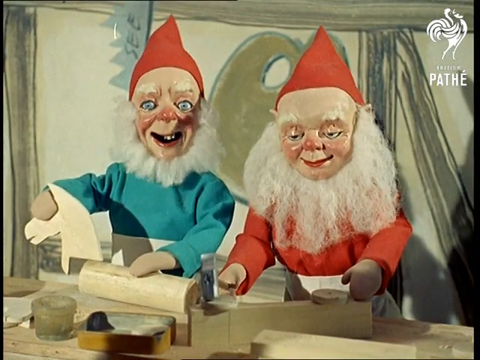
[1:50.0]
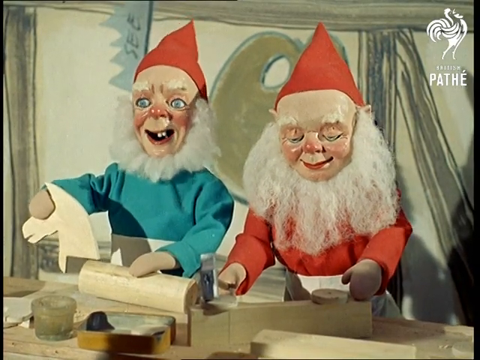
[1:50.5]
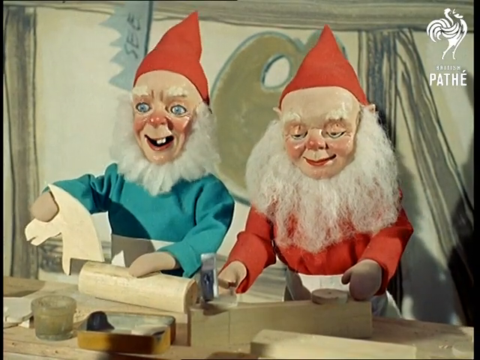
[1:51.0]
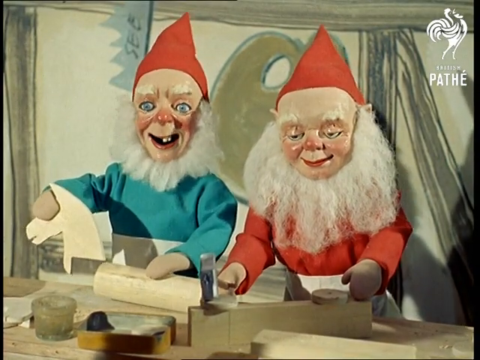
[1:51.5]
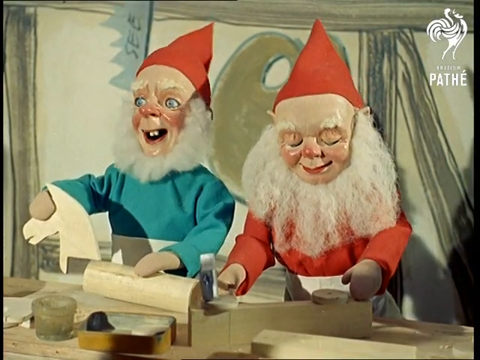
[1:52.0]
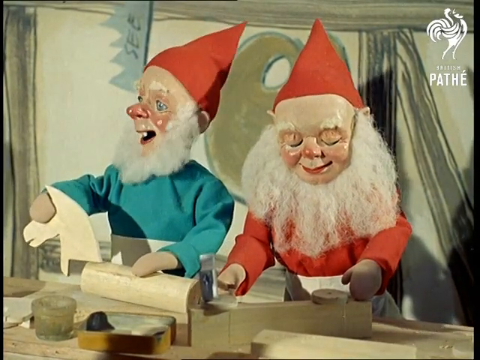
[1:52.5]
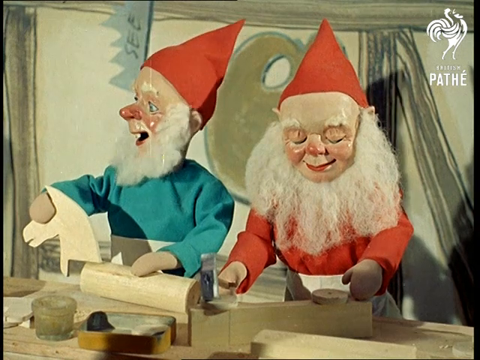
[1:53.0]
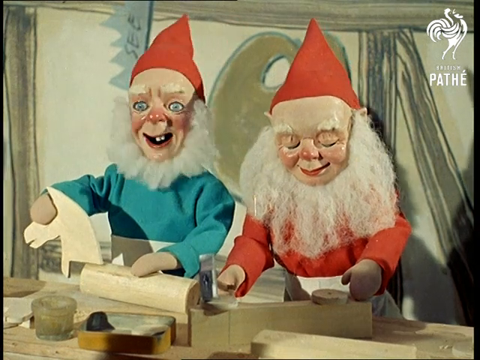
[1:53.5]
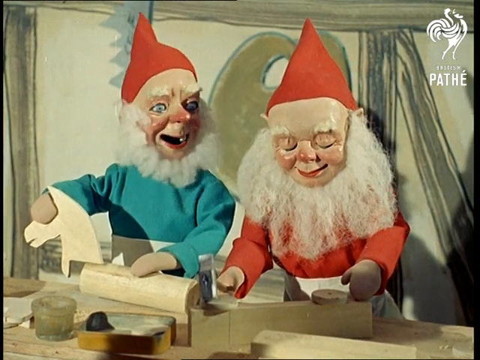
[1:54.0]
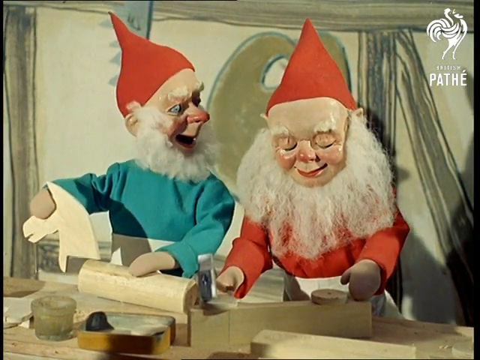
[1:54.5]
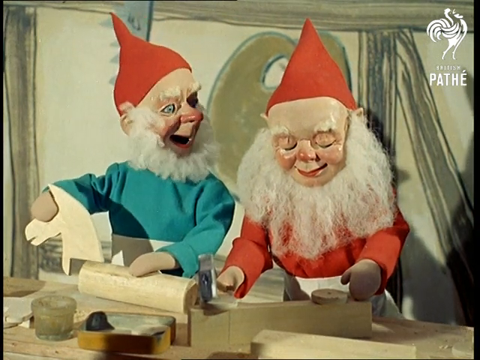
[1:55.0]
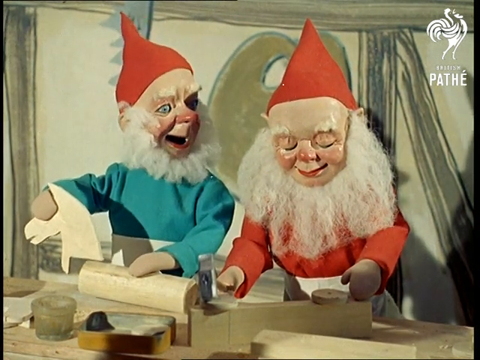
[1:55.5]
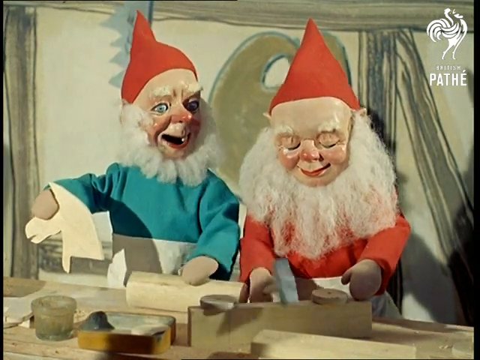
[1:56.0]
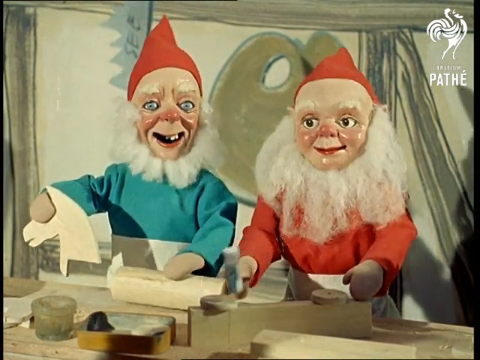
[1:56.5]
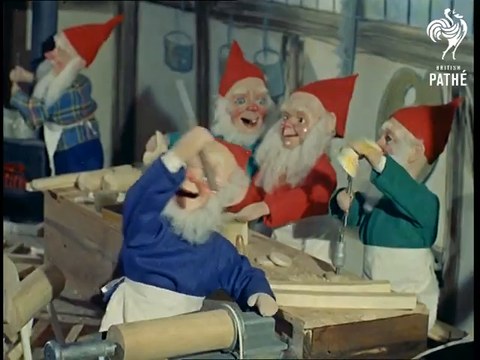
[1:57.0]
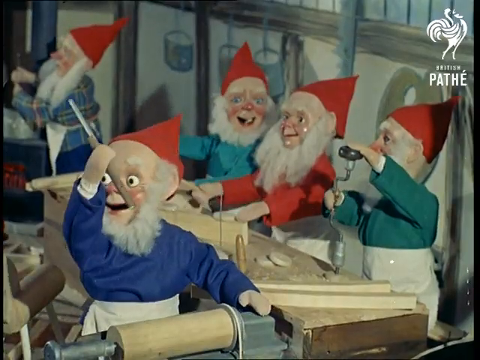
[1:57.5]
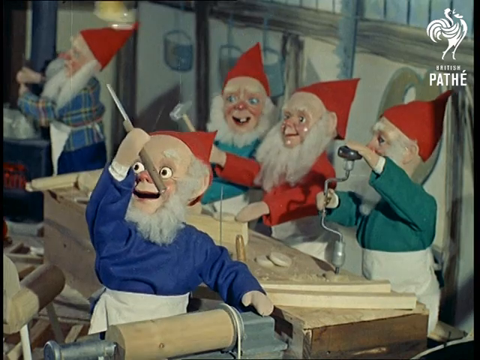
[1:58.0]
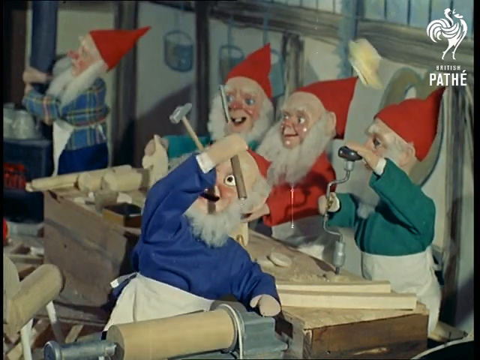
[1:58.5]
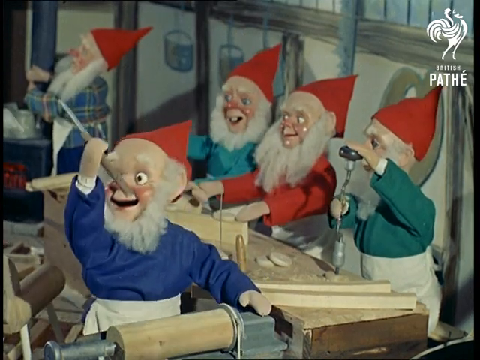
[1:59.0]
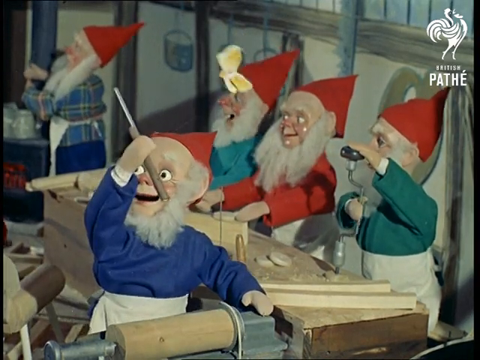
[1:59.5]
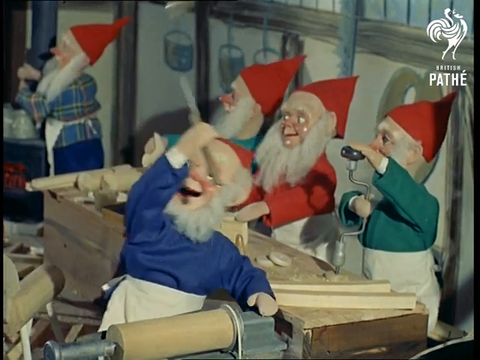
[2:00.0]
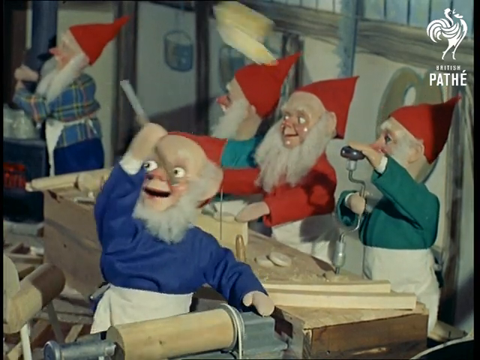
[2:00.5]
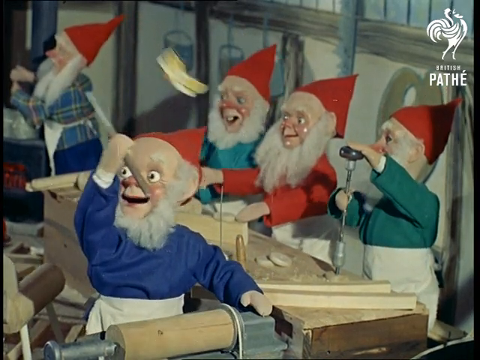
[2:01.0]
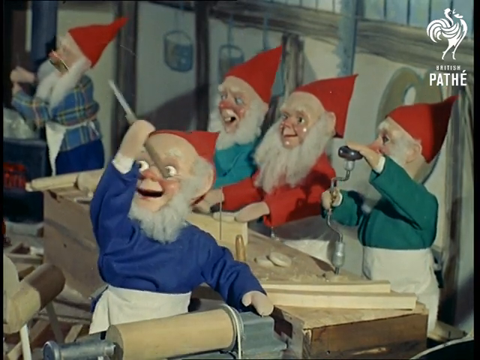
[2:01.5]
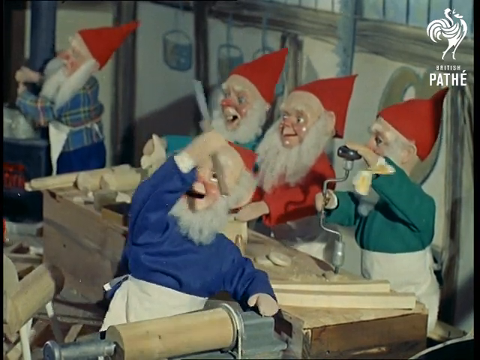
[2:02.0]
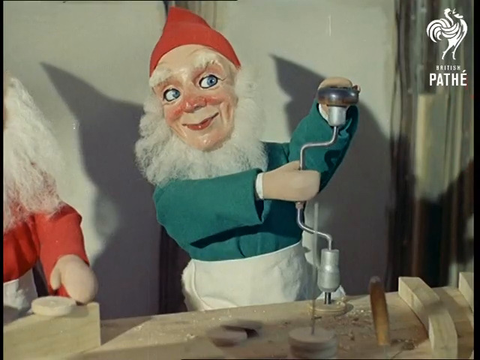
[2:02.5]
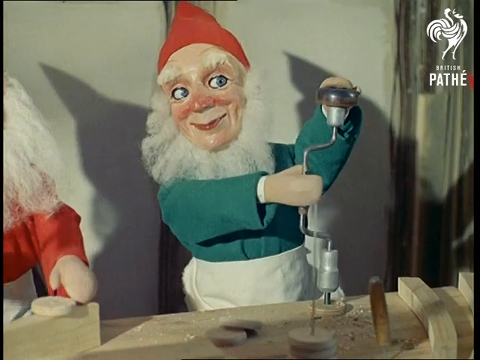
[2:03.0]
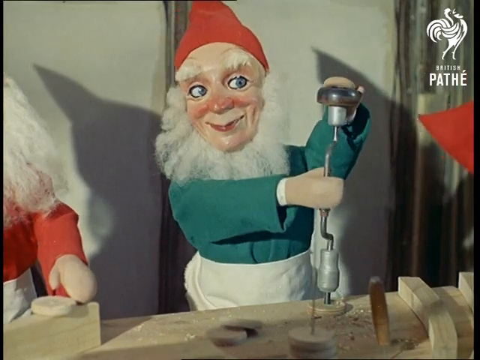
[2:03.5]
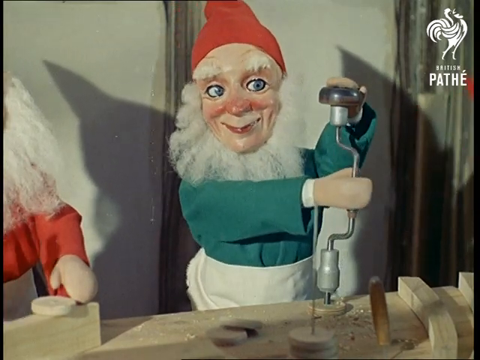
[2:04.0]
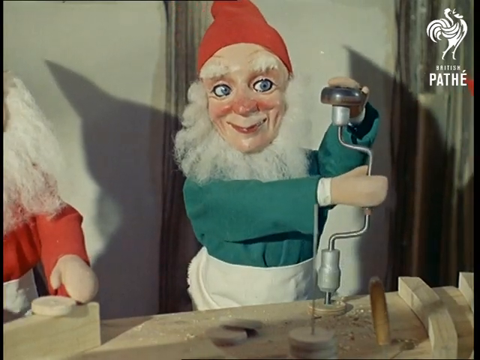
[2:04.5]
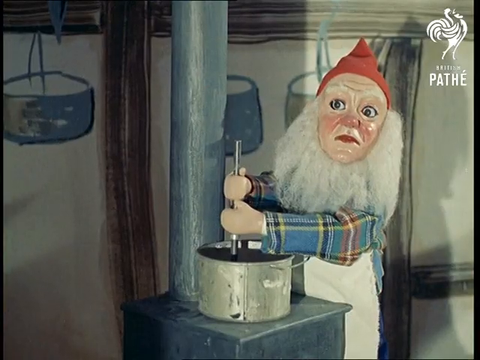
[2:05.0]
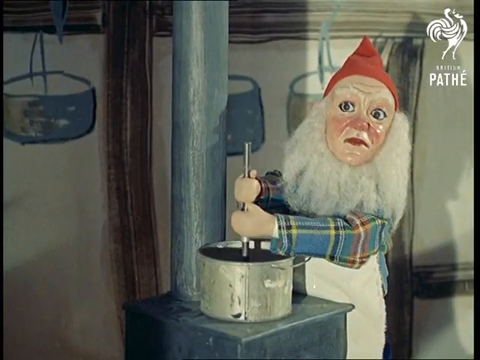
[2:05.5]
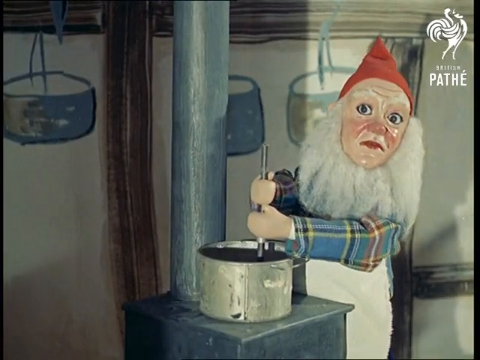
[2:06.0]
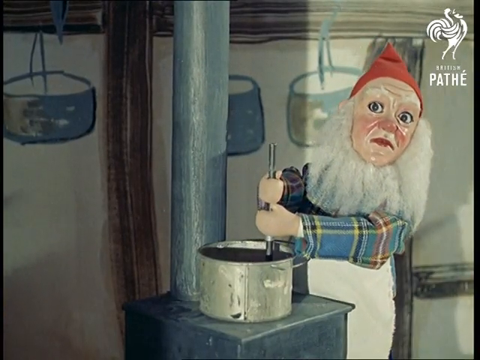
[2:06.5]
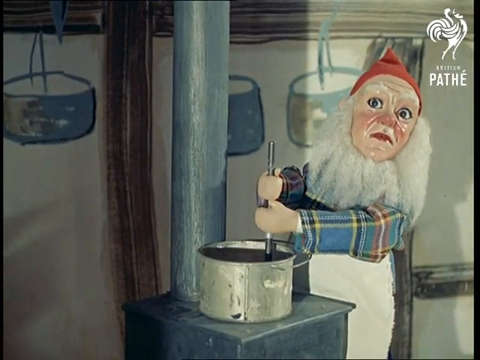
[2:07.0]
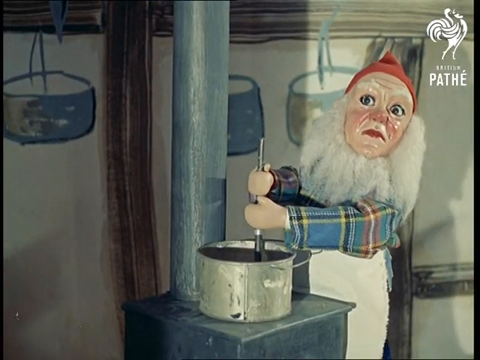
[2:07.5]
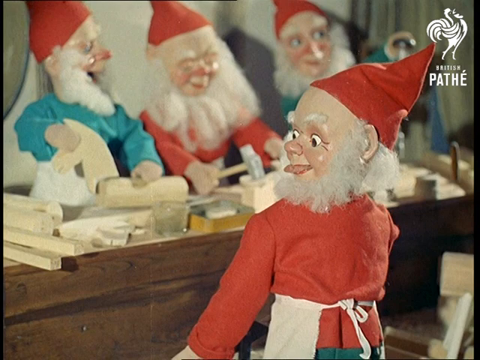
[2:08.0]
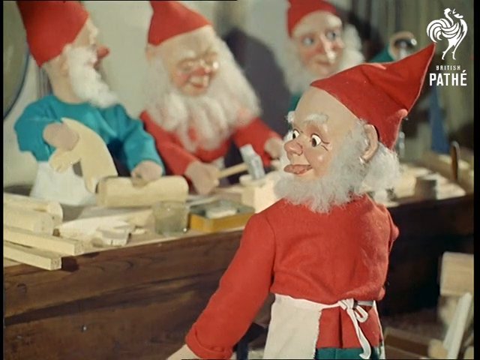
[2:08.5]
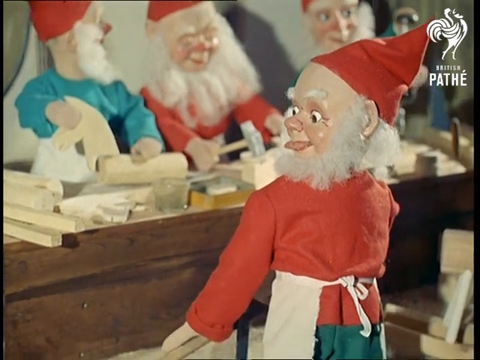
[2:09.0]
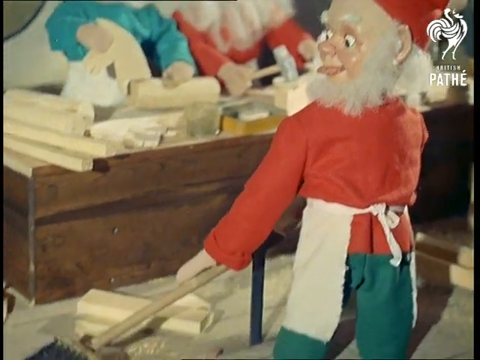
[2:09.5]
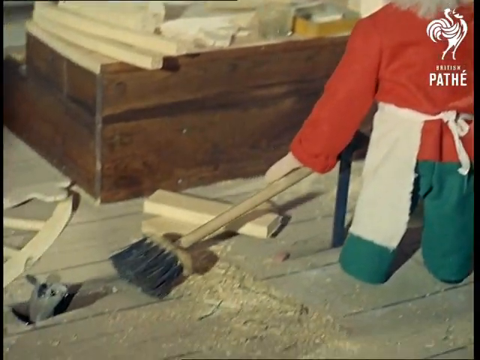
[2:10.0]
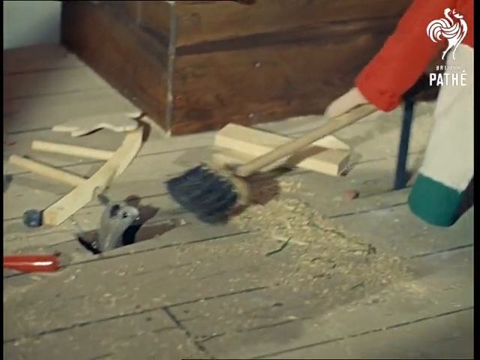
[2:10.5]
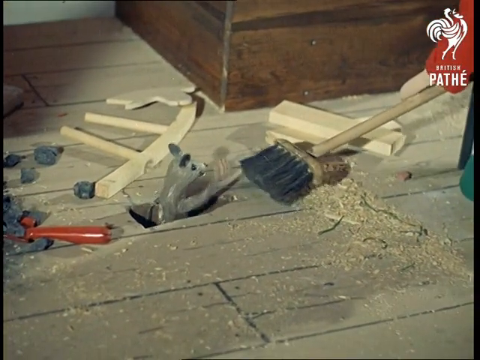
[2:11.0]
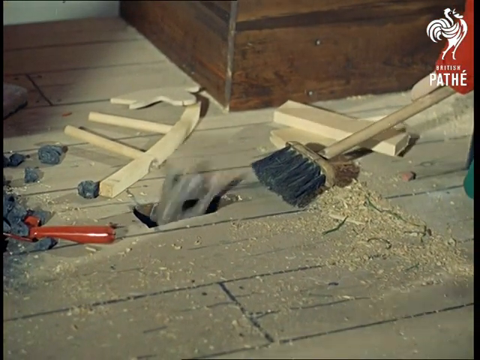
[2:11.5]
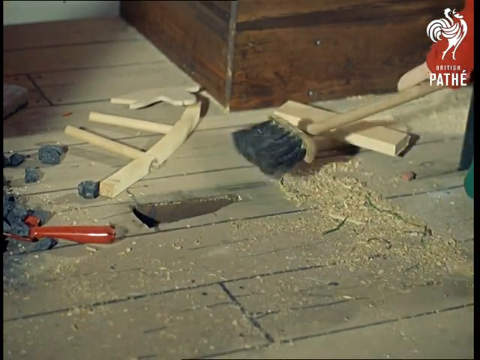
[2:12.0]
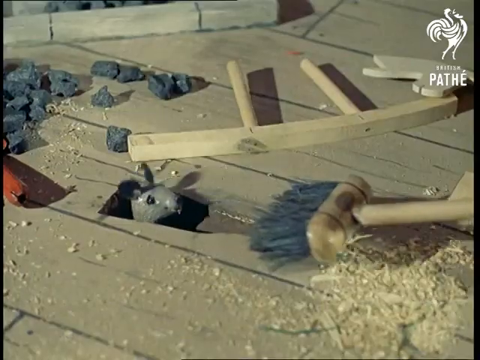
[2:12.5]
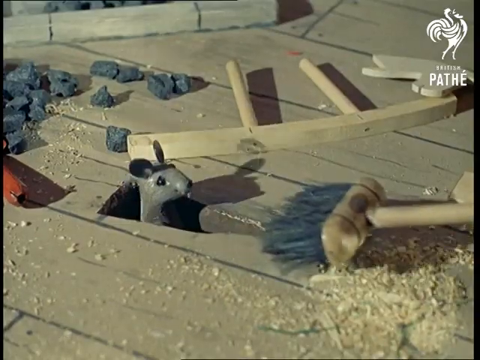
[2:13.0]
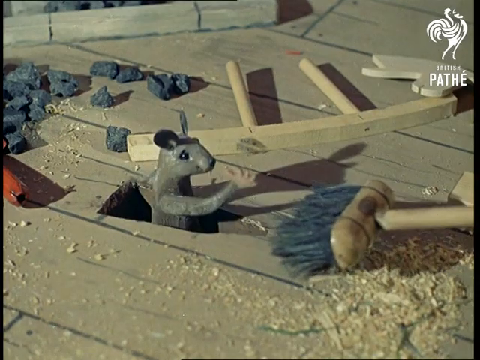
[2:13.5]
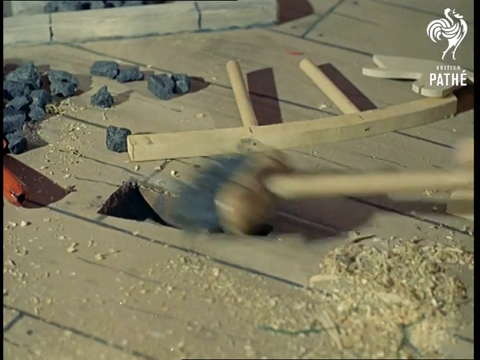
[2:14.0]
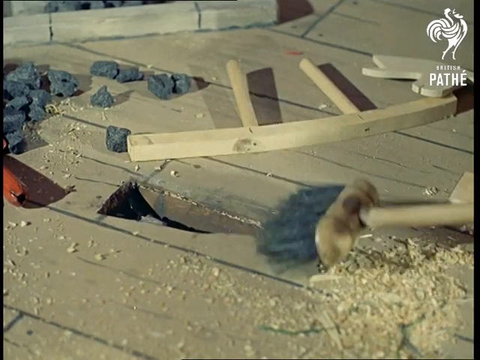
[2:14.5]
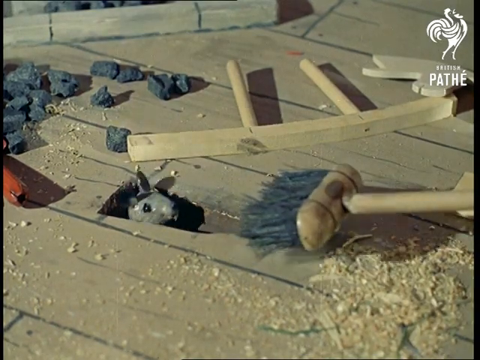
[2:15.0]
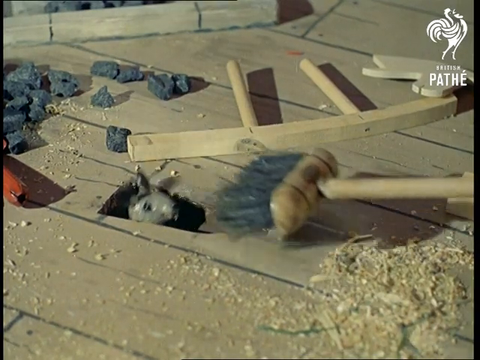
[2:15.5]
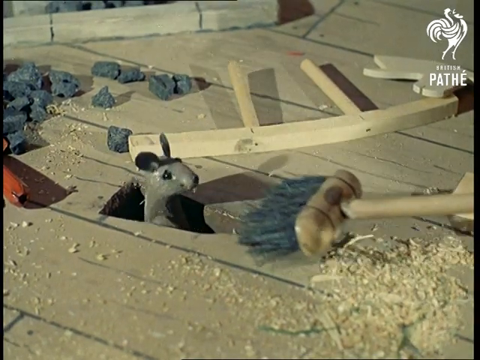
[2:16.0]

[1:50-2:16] In the woodwork shop, two puppets are visible. One wears a green shirt and the other a red one, and they have white beards and red hats. One hammers wood with a hammer, while the other seems to hold the head of a wooden horse figure and try to connect it to the torso, so they seem to be building a wooden horse. The video cuts to a different scene with five puppets. One seems to be drilling into wood with a manual tool. Another waves something, some sort of butterfly. One stirs a pot on a hot stove, seemingly cooking. One mops the floor, and a mouse comes out of something kind of like a hole in the floor; when the puppet mops, the mouse hides inside the hole. The other puppets work on their wooden objects. The shots are more focused on each individual puppet, and they all seem to be doing something. One of them is even sleeping a bit, and another one kind of gives him a nudge and wakes him up.